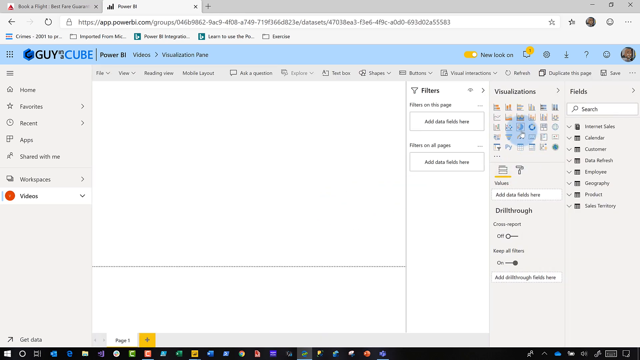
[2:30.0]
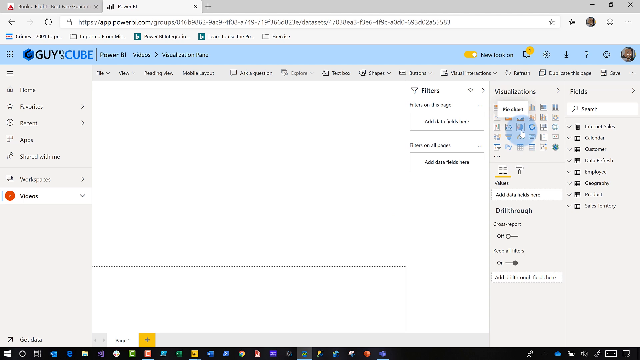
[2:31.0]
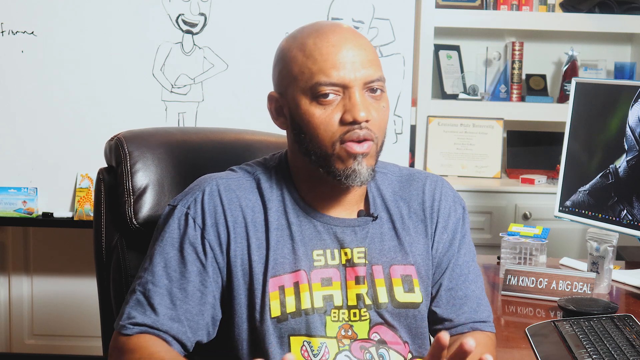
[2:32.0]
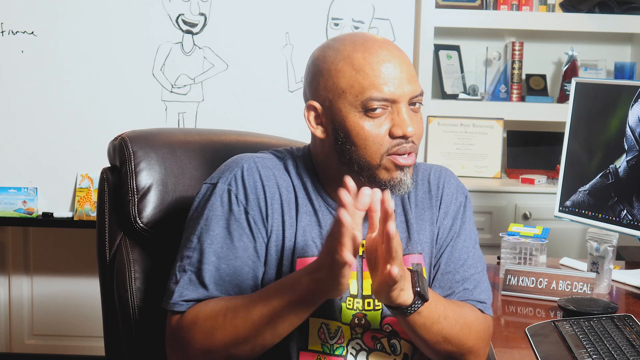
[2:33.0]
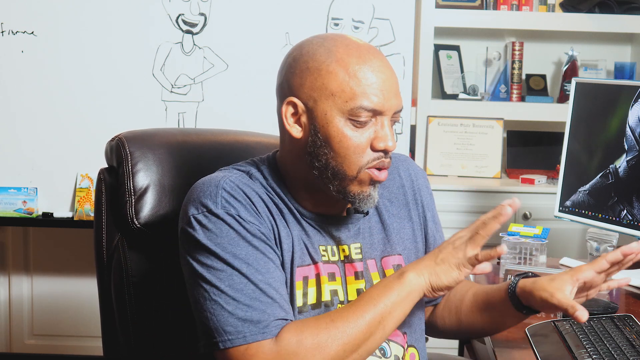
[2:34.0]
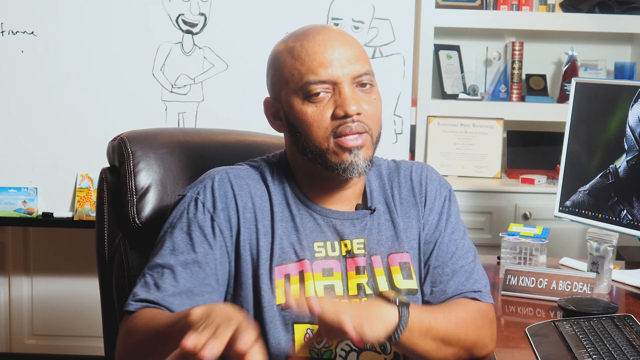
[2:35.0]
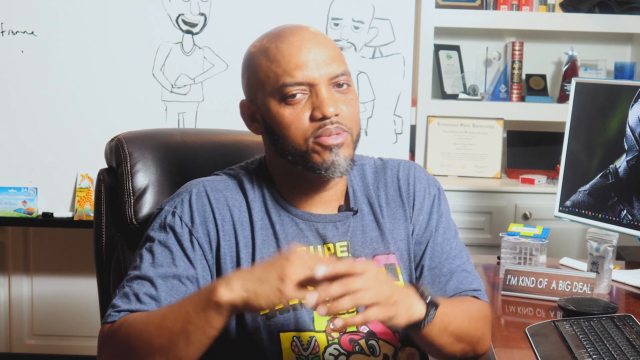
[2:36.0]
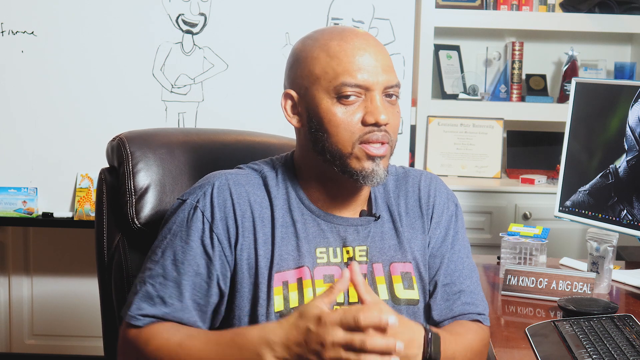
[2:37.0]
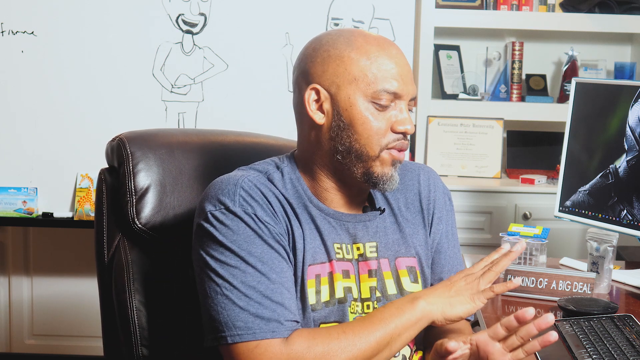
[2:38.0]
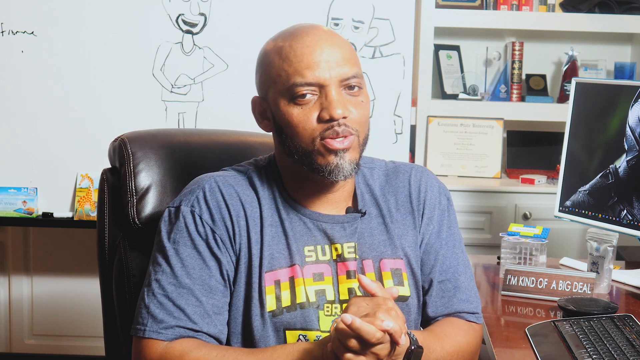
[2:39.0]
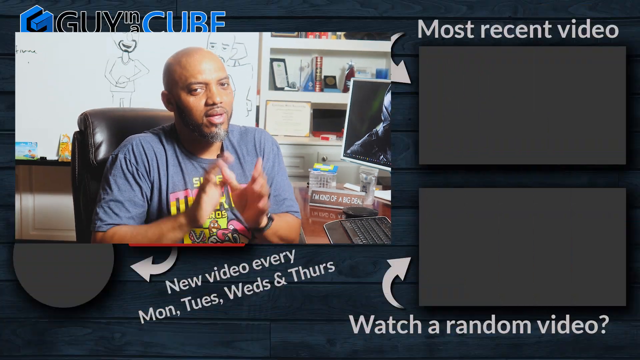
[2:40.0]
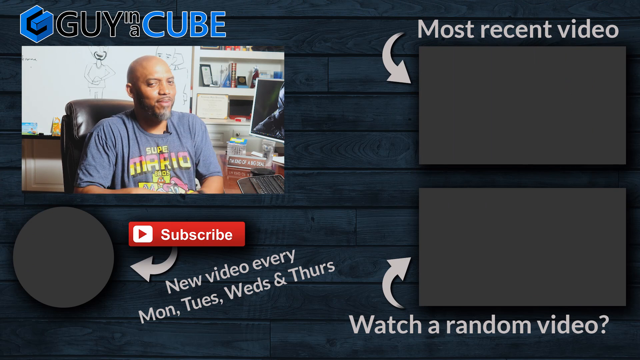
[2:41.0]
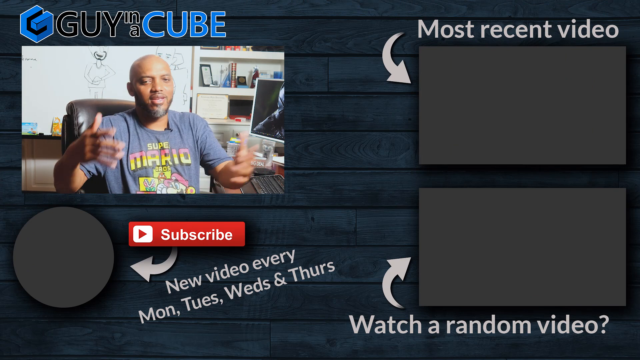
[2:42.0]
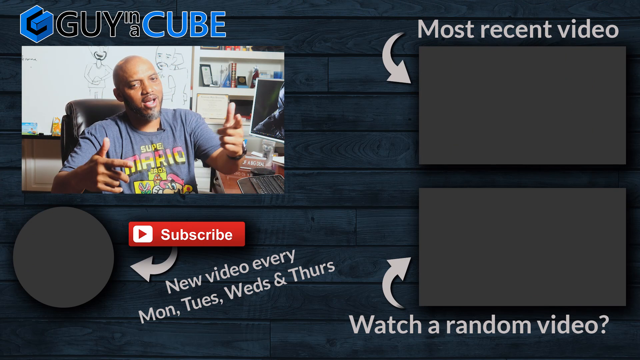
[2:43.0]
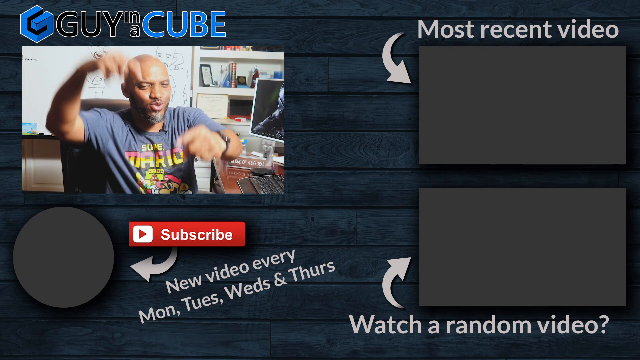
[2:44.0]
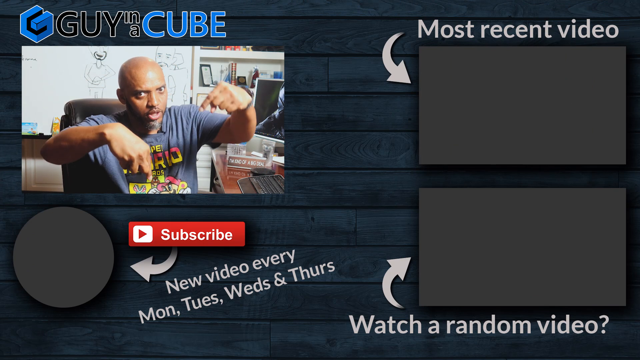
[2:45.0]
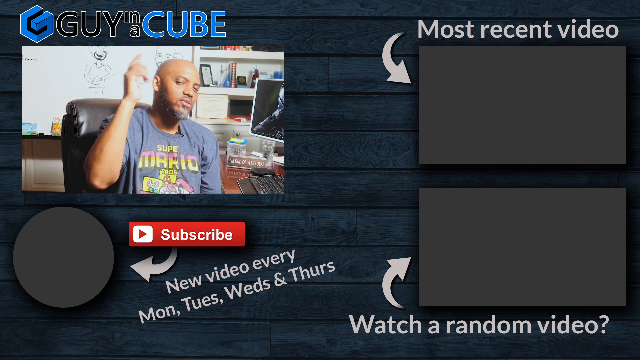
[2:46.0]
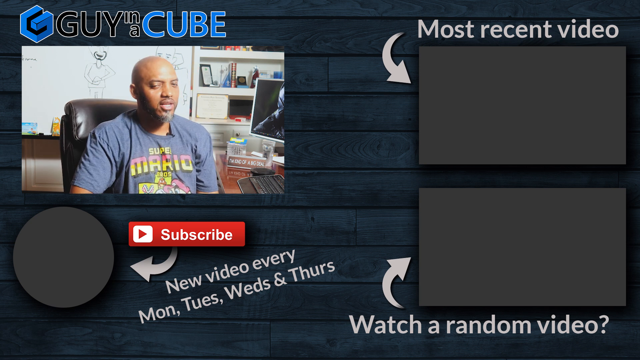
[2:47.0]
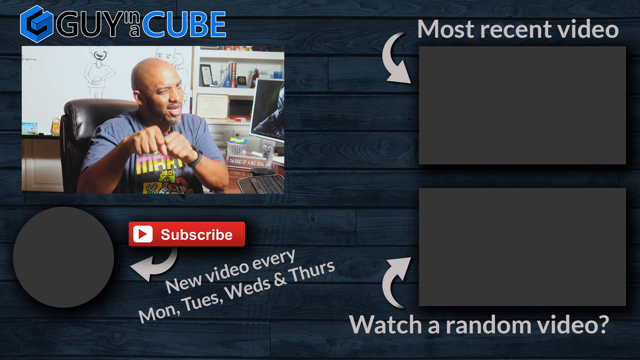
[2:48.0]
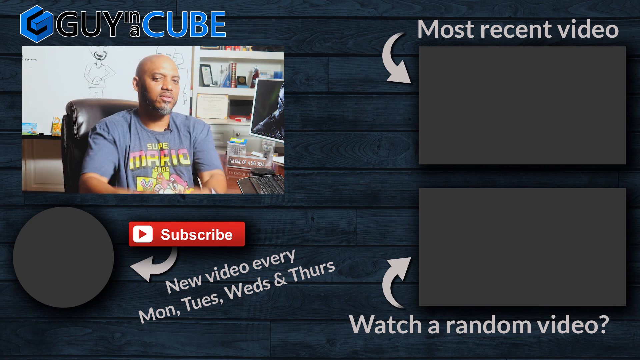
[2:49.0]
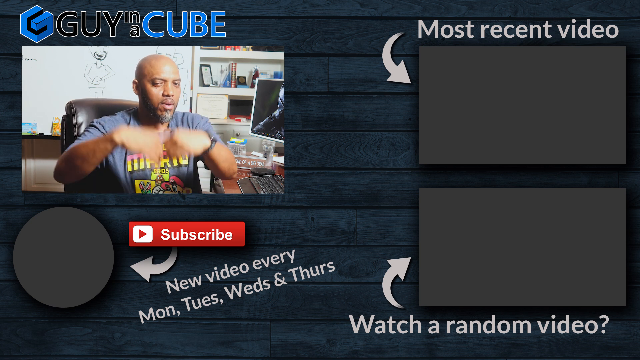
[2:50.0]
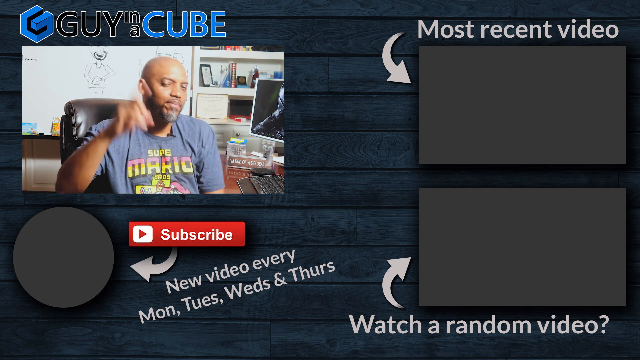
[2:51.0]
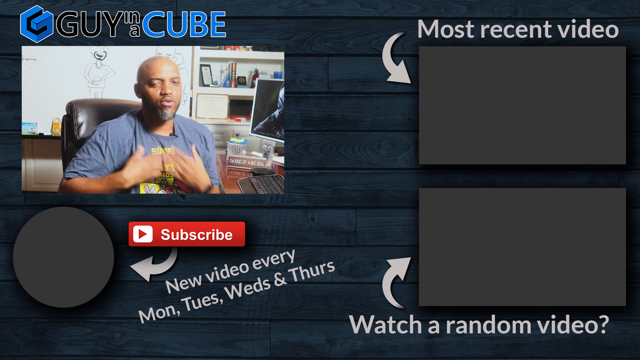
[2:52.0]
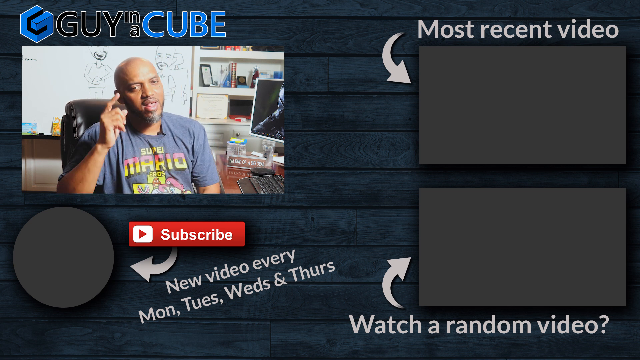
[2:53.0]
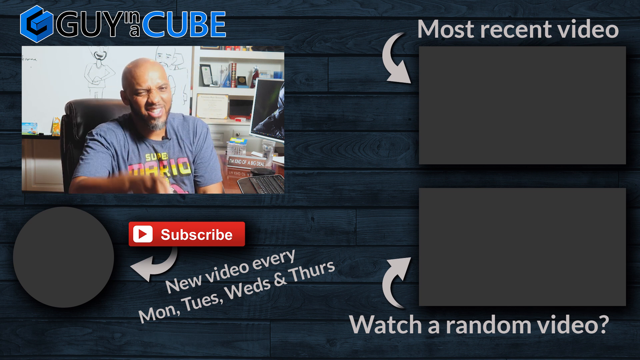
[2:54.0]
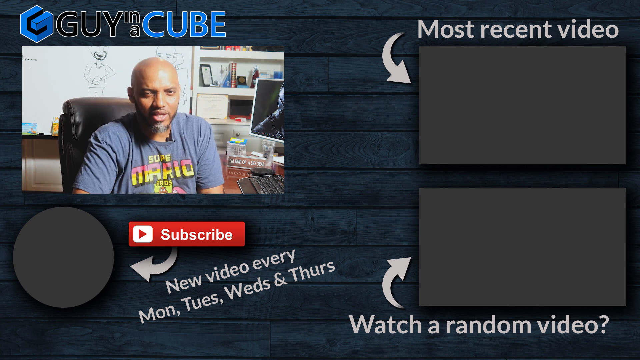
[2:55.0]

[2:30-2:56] The man is shown on camera again, moving his hands back and forth between the computer and the camera area as he gestures and talks. He keeps talking, locks his hands in place, and then his window is minimized to the left side of a closing screen, under the title "Guy in a Cube." Below that is a red rectangle that says "Subscribe, new video every Monday, Tuesday, Wednesday, and Thursday." On the right-hand side is a video frame labeled "Most recent video," and at the bottom right it says "Watch a random video," with an arrow pointing to that screen. He continues to talk in the window and points at the camera again before the video ends.